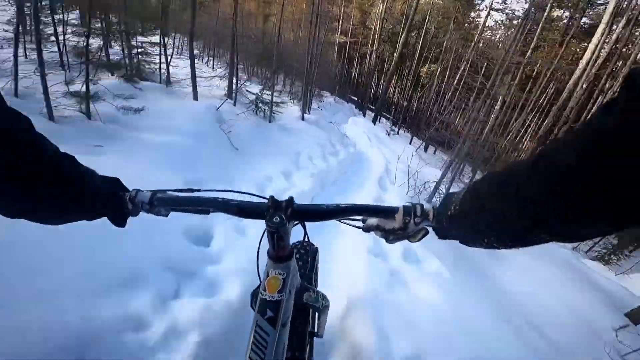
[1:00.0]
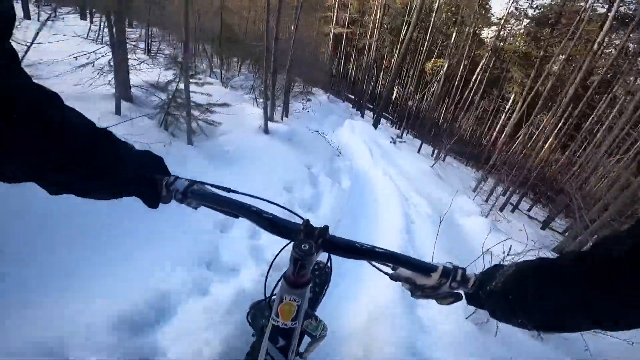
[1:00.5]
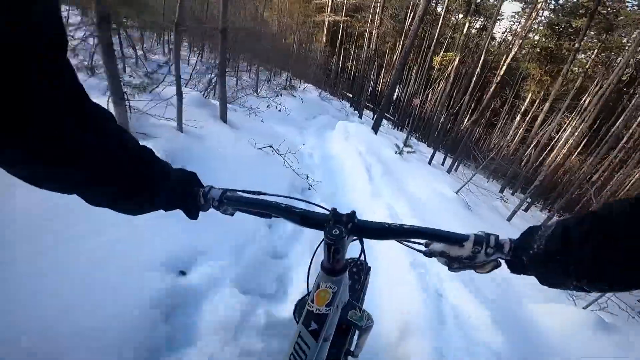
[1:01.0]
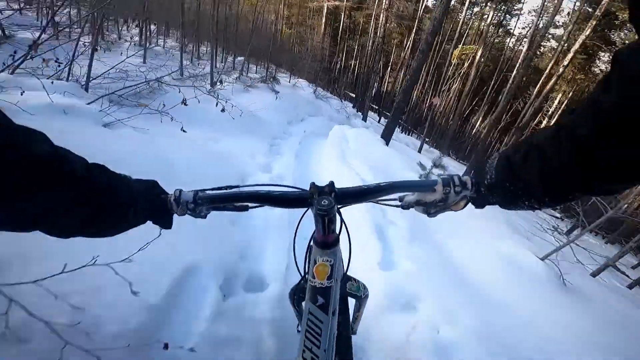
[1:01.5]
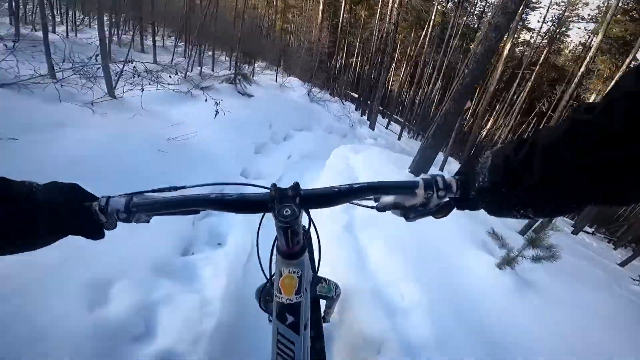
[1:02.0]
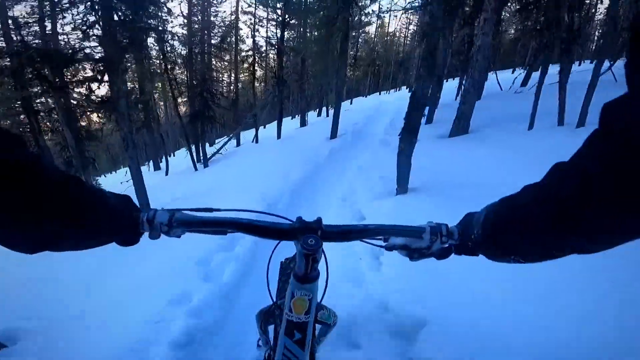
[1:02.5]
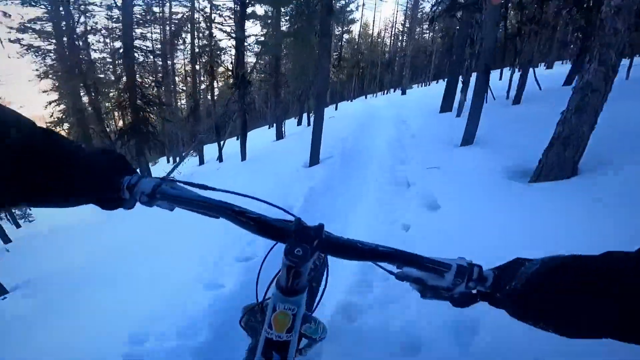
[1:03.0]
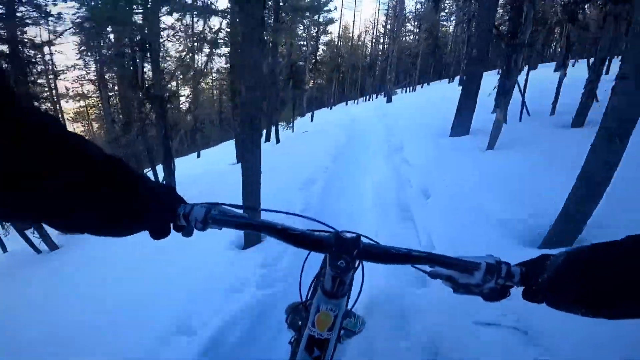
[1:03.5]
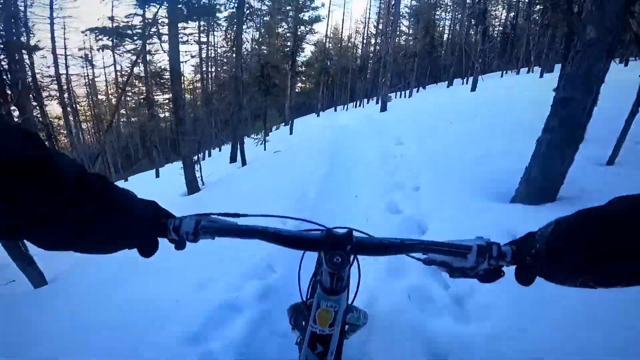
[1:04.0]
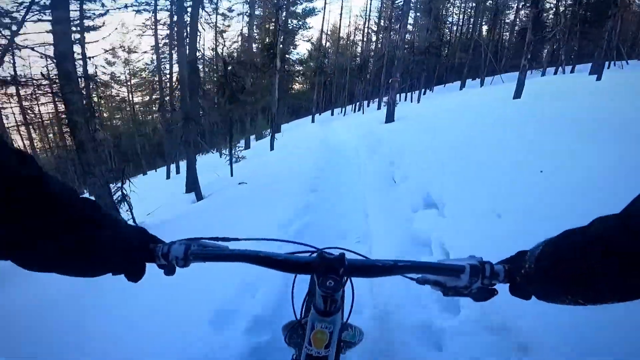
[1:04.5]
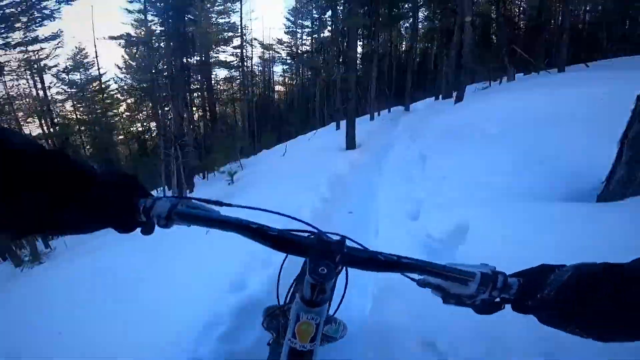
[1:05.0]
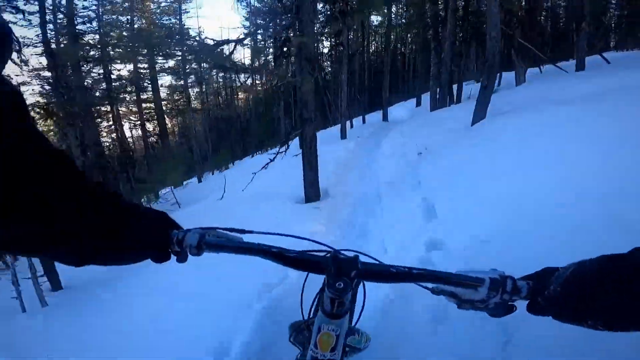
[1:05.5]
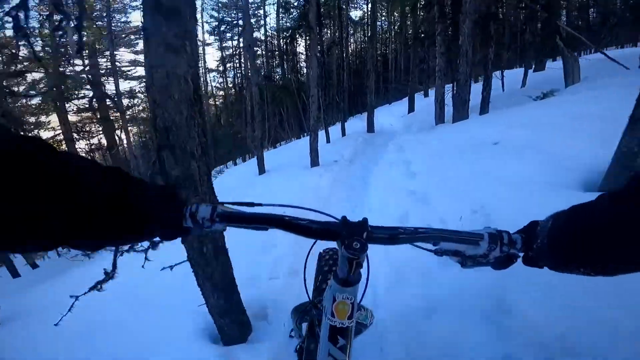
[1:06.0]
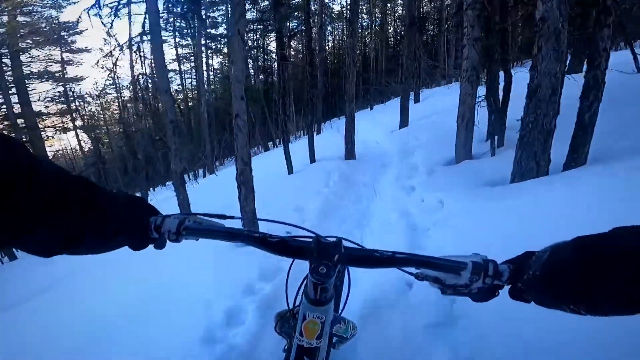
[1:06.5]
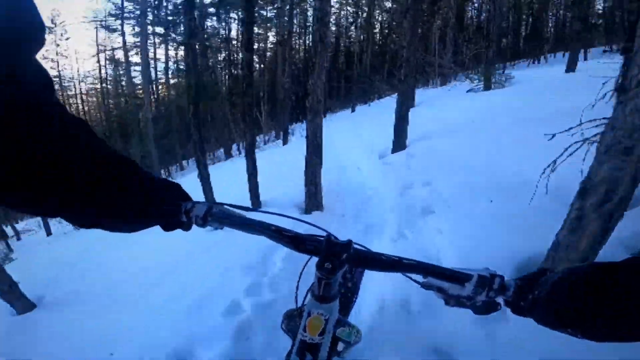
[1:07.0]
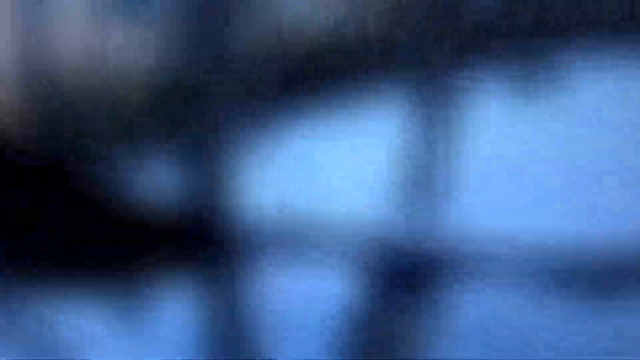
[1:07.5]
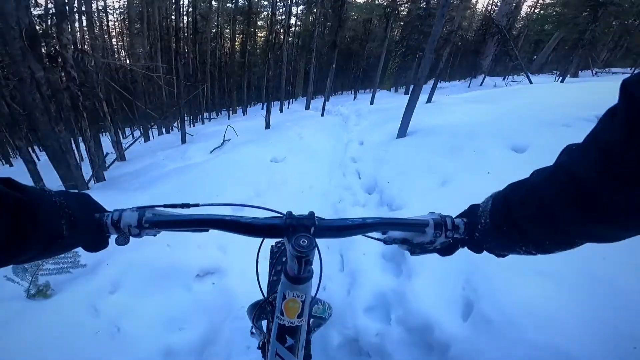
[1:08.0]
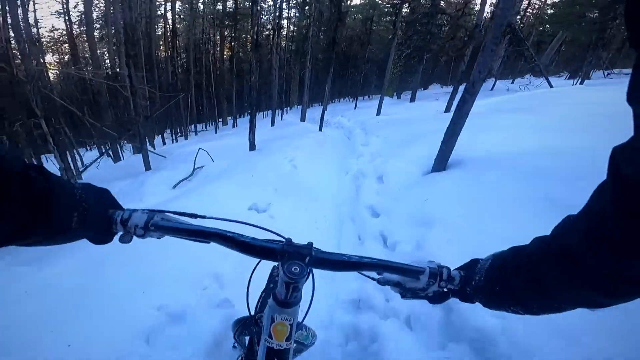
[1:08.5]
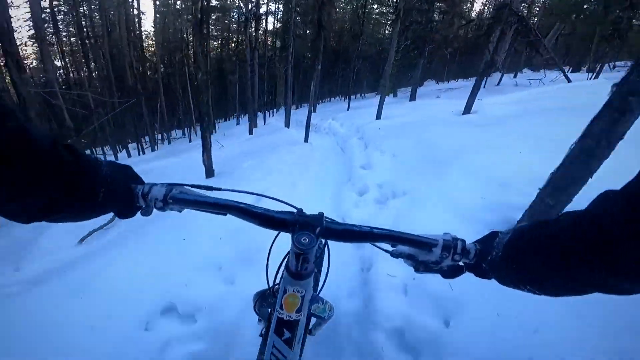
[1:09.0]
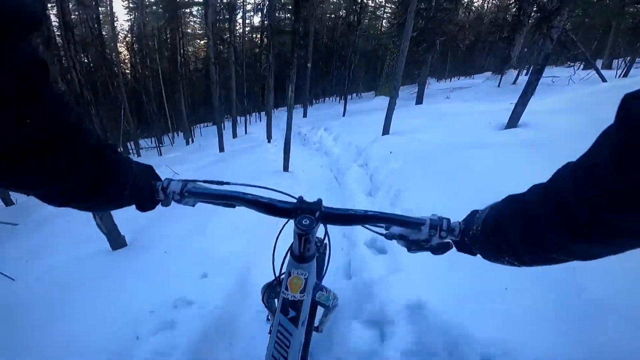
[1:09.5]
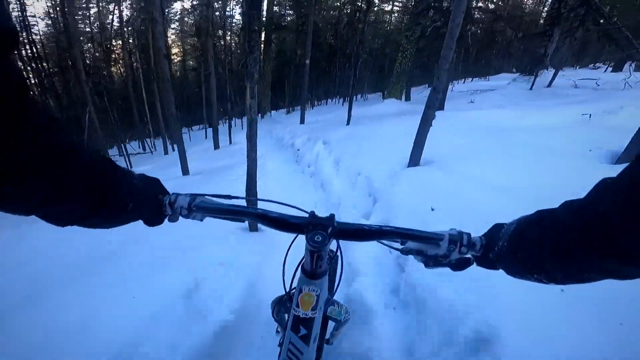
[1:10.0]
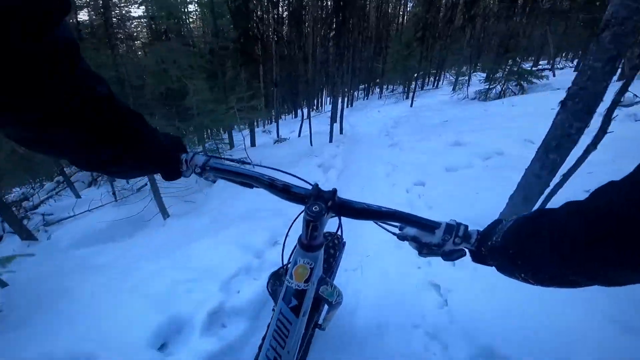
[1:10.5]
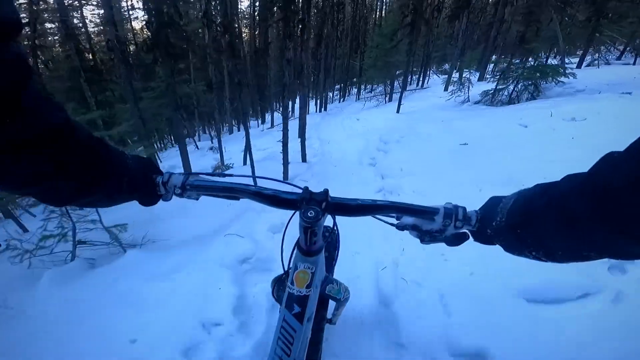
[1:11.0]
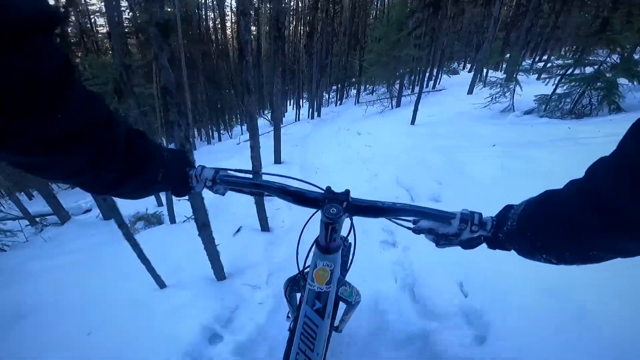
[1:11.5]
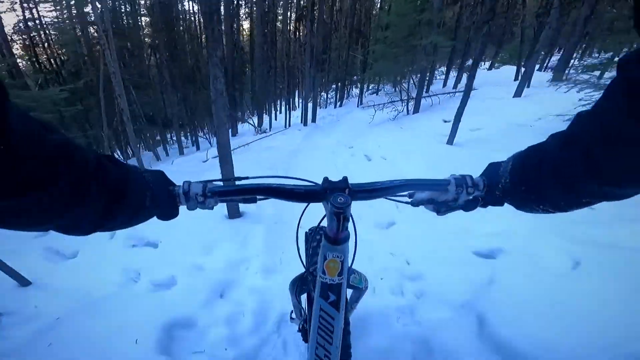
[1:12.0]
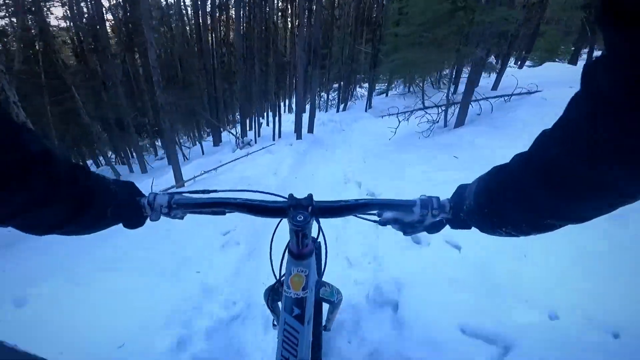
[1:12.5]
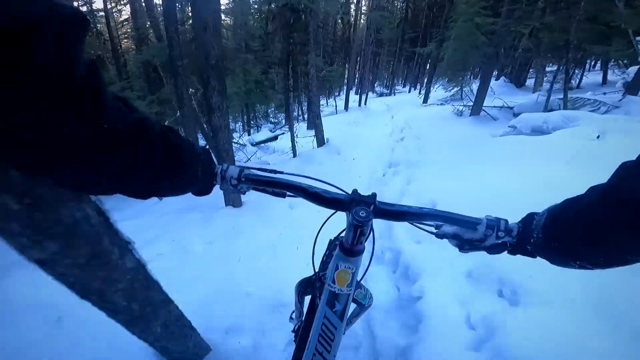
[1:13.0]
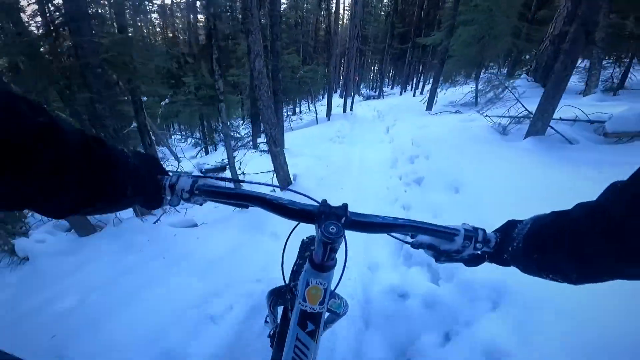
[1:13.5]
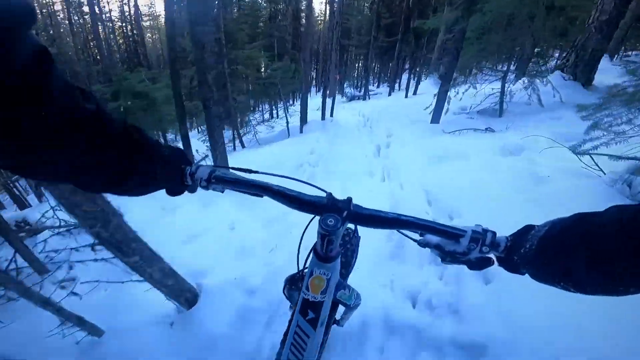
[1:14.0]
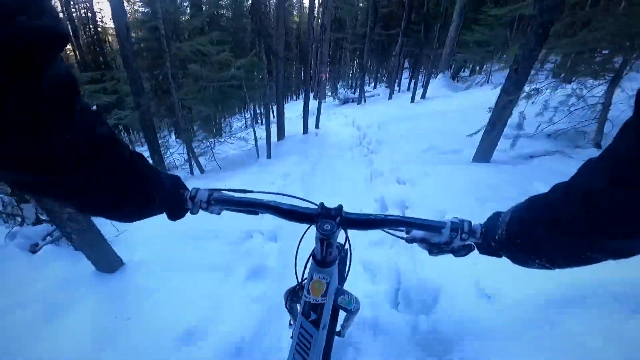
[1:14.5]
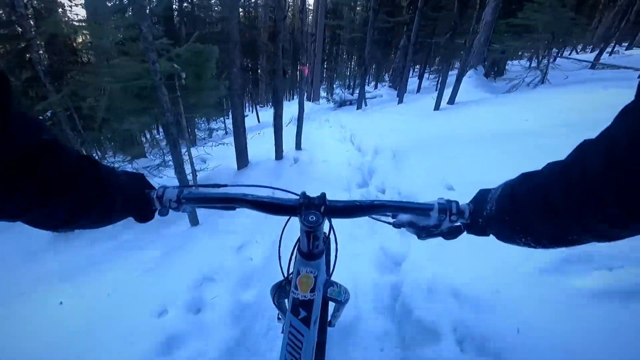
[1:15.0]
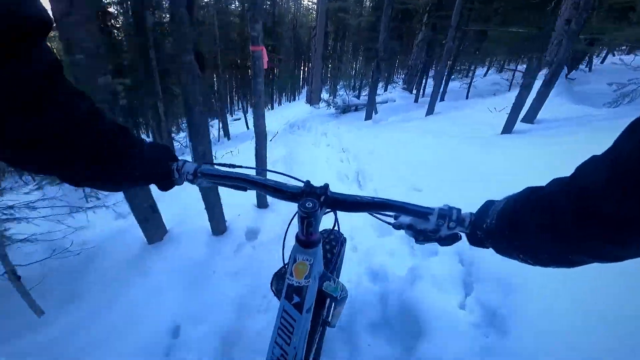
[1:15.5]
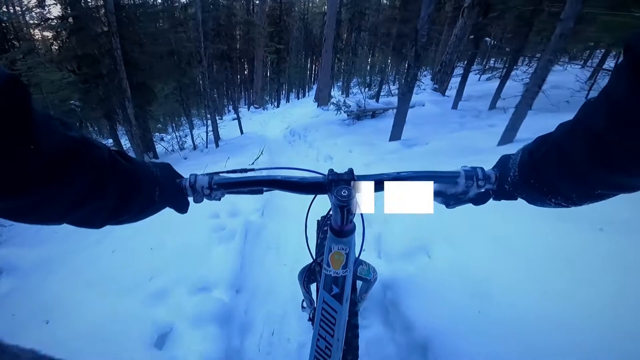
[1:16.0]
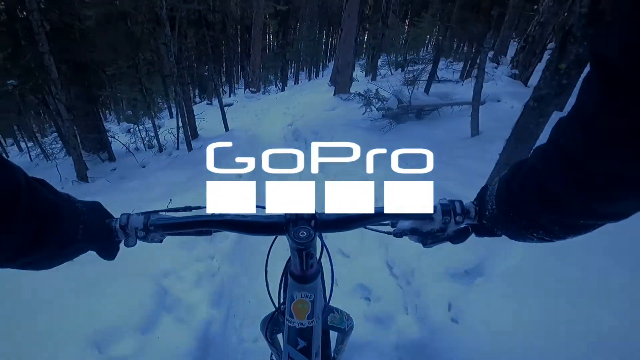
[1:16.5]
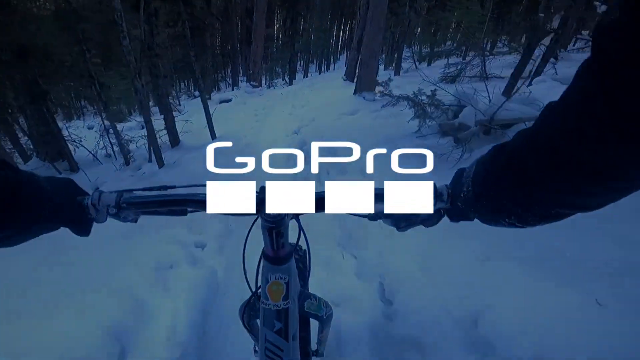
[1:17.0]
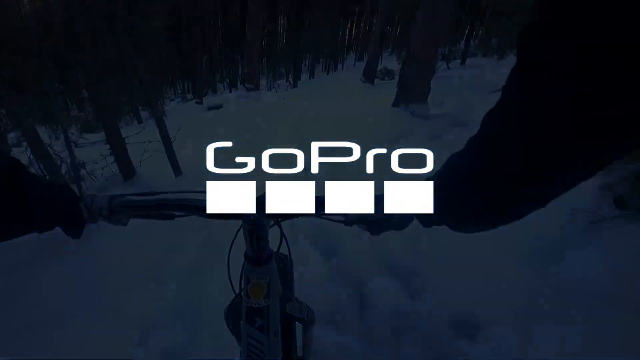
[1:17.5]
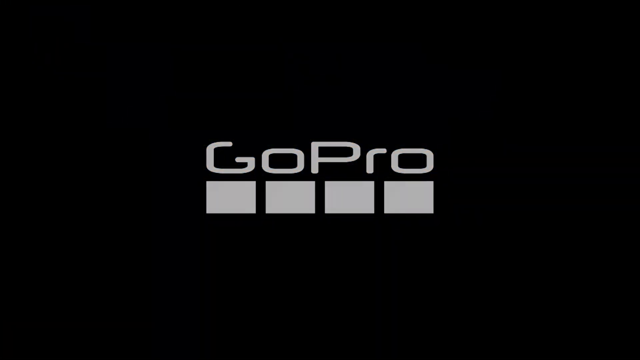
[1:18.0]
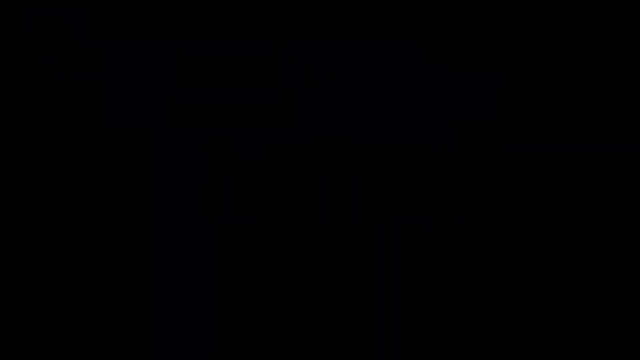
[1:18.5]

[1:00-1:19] The rider keeps going downhill in a series of short, quick shots that fade in and out. Trees, tree branches and tree litter are visible on the ground. This part is a little darker and not as sunny, possibly because of the trees or the time of day. There is still a lot of snow everywhere, with branches everywhere and many trees. He wears a black jacket and black gloves, his handlebars are probably gray and white, and there is a yellow sticker on the body of his bike. With trees all around him, he chooses which trees to go around while still roughly following the path. At the very end, the video fades out to a black screen with the GoPro logo and the text "GoPro".